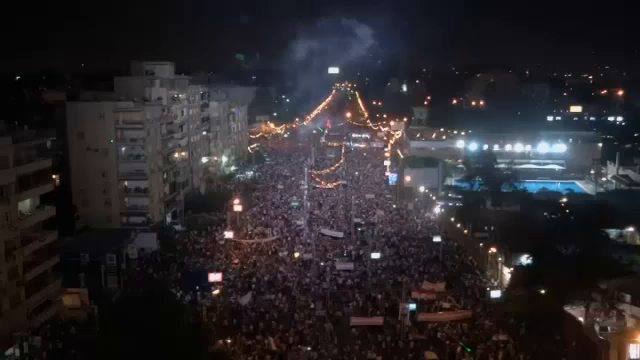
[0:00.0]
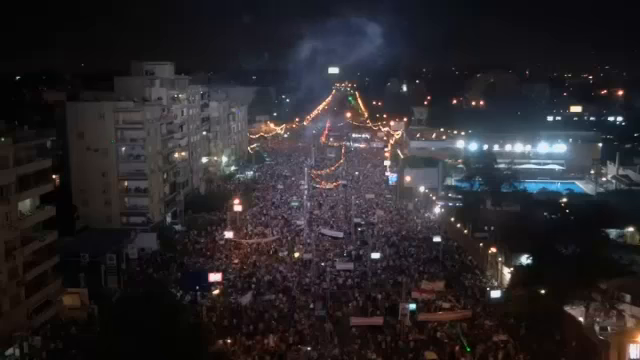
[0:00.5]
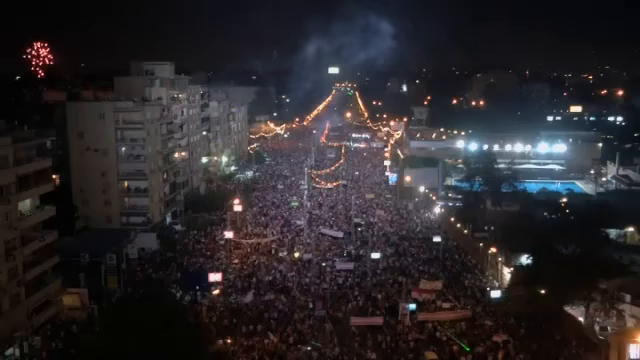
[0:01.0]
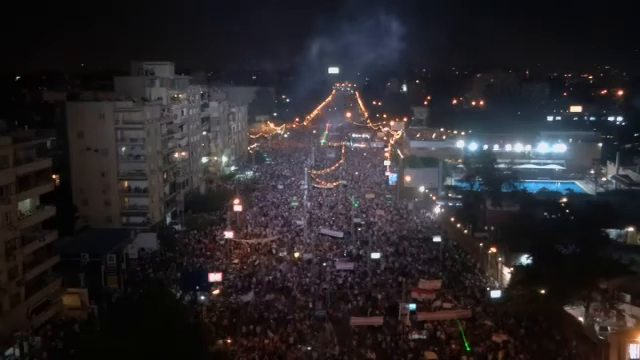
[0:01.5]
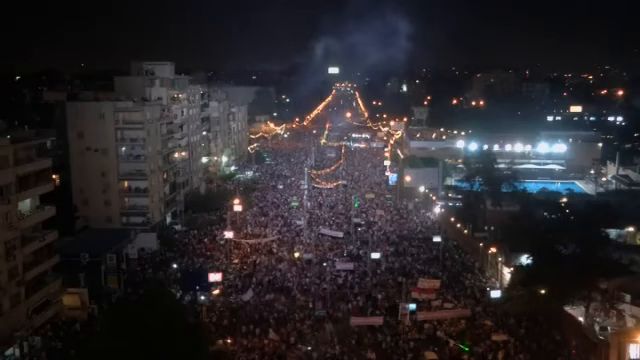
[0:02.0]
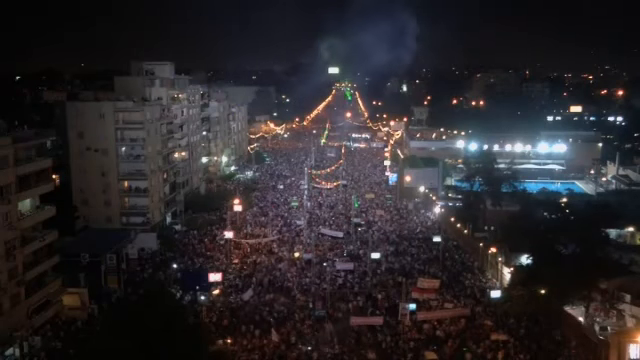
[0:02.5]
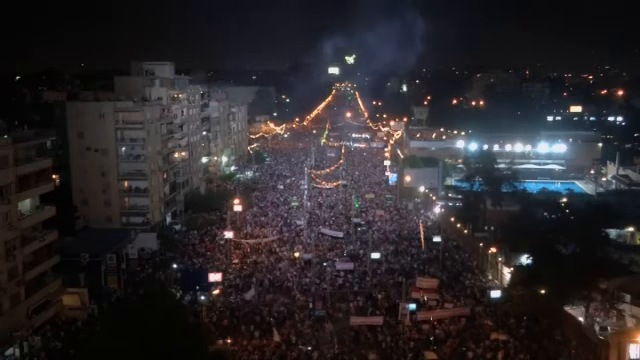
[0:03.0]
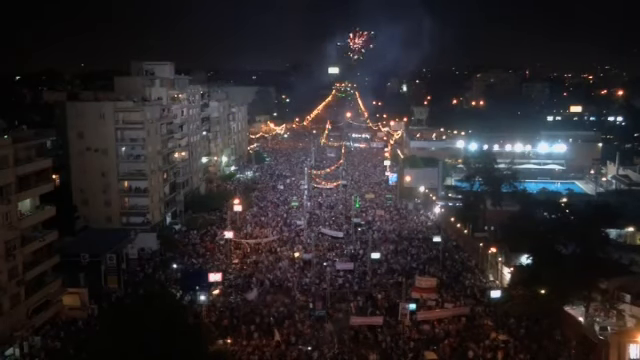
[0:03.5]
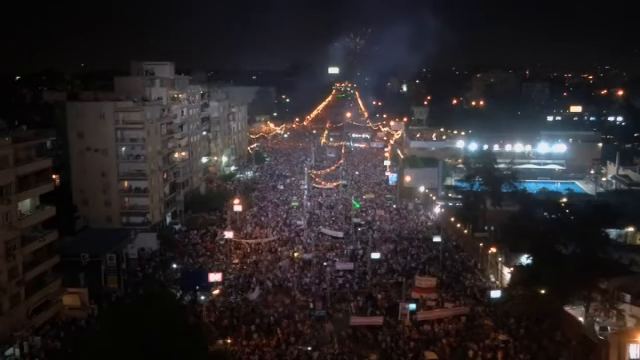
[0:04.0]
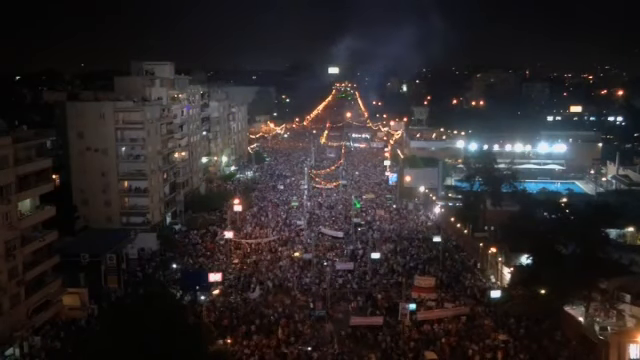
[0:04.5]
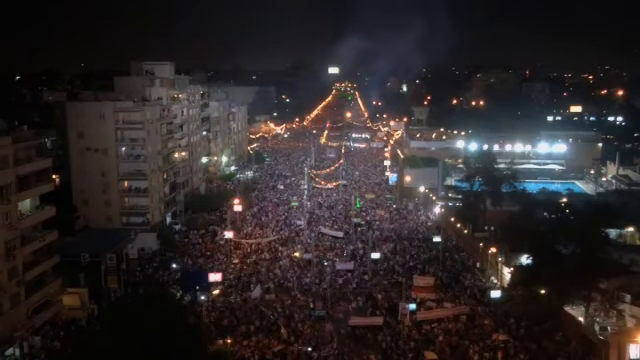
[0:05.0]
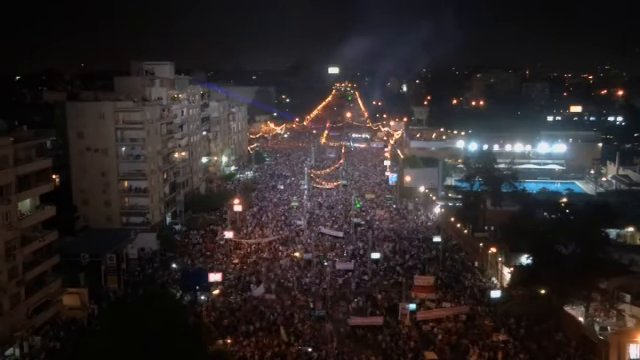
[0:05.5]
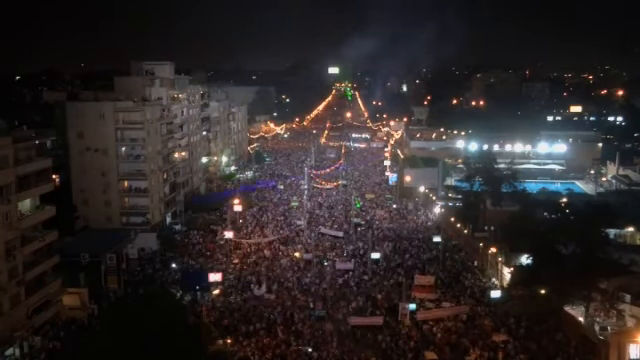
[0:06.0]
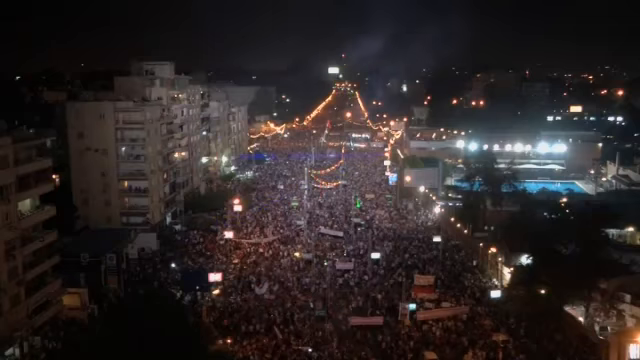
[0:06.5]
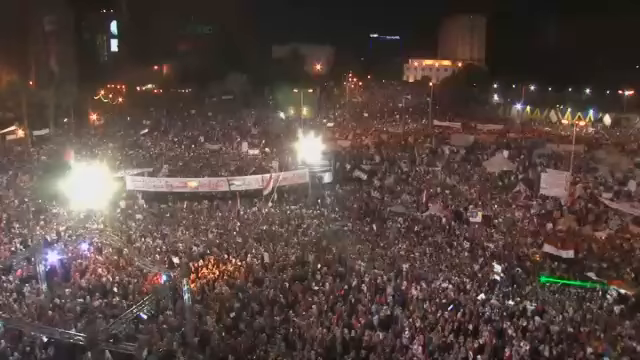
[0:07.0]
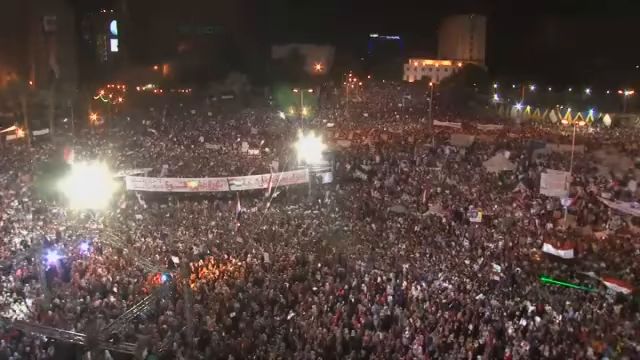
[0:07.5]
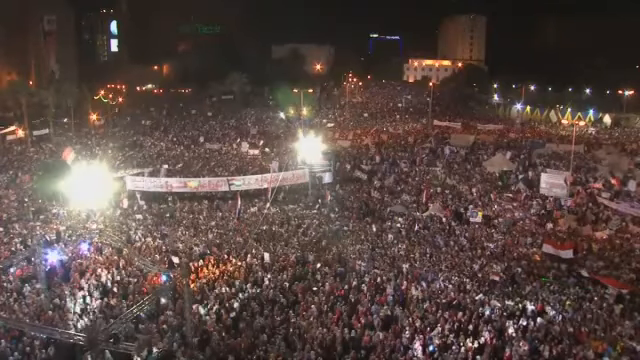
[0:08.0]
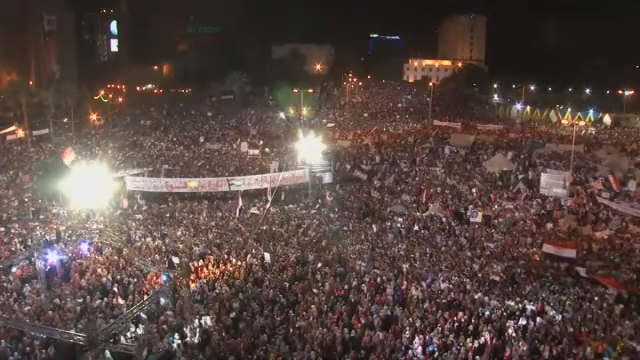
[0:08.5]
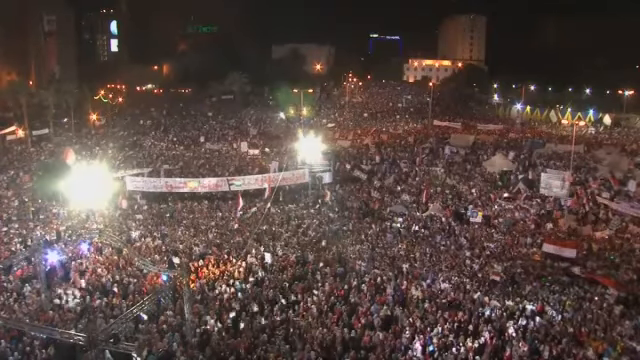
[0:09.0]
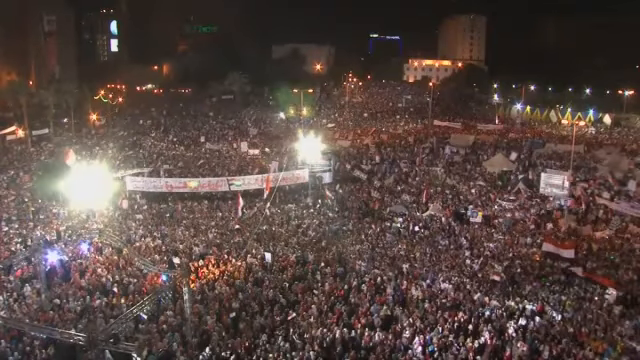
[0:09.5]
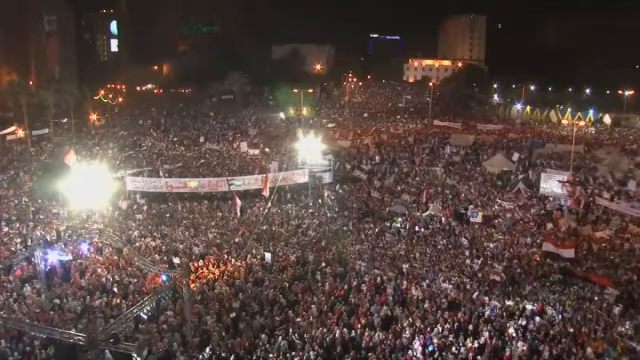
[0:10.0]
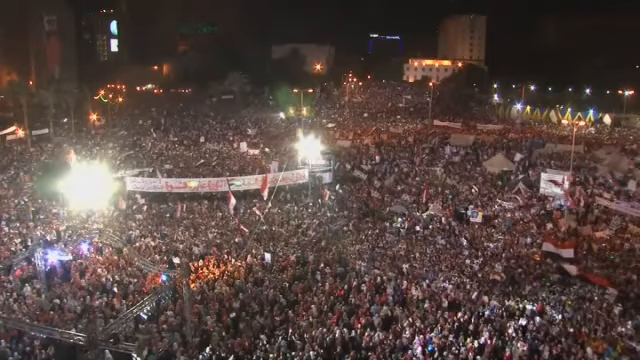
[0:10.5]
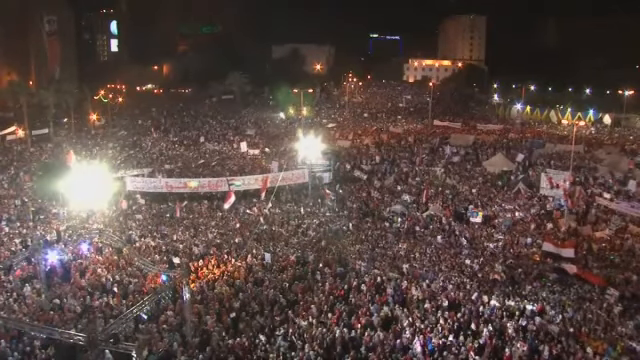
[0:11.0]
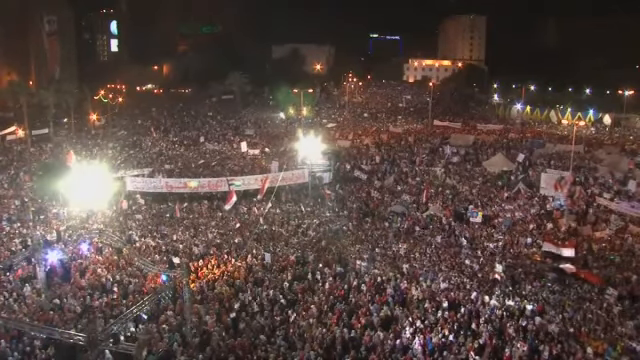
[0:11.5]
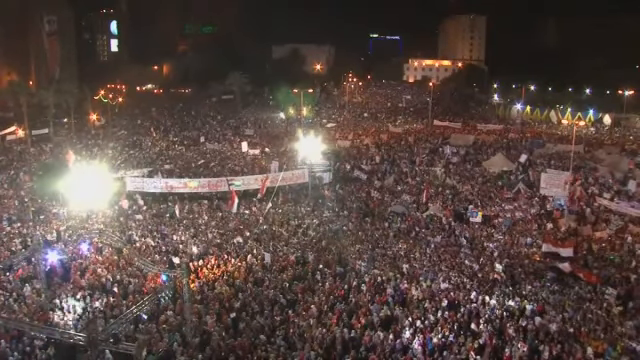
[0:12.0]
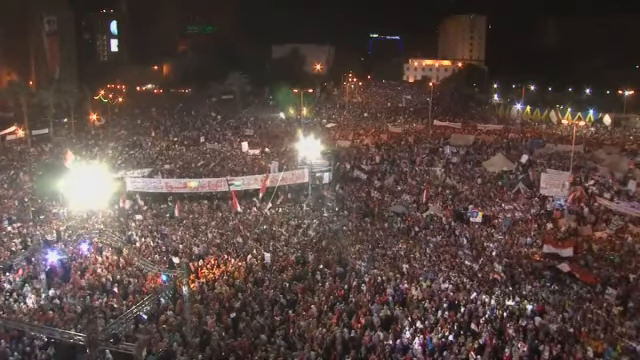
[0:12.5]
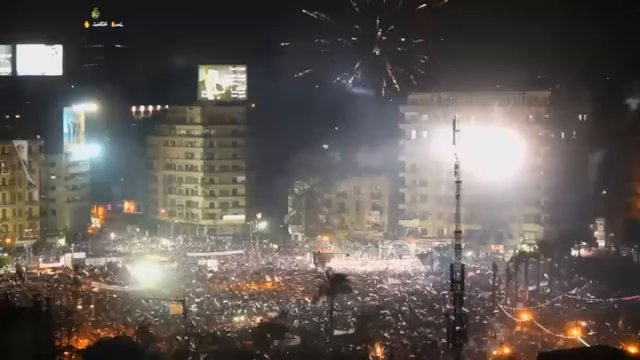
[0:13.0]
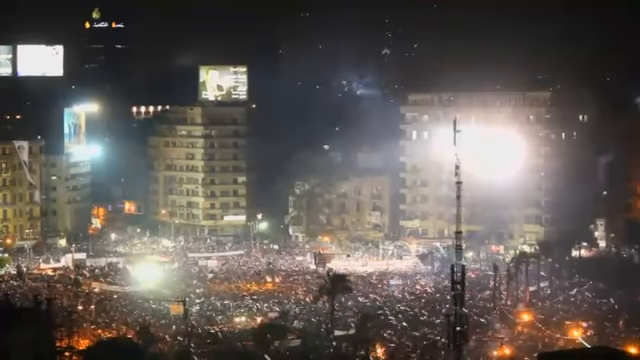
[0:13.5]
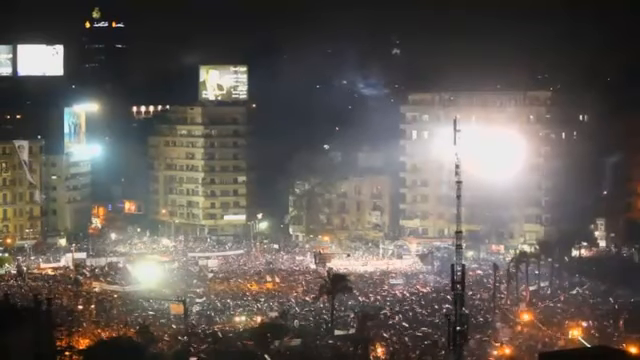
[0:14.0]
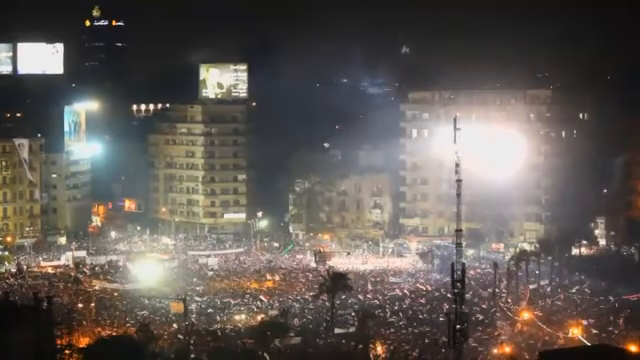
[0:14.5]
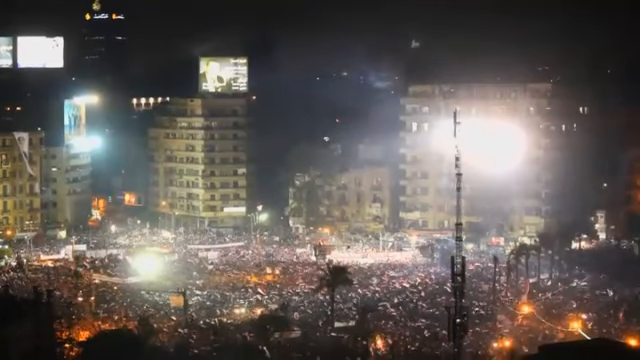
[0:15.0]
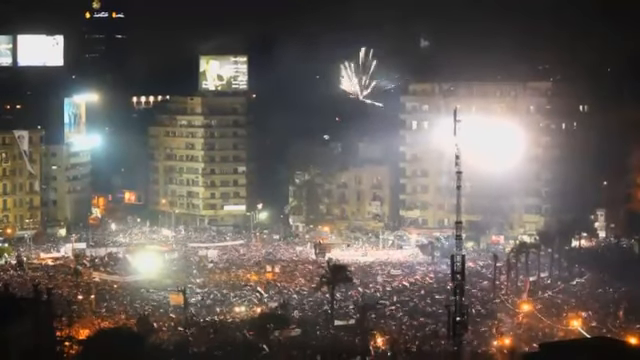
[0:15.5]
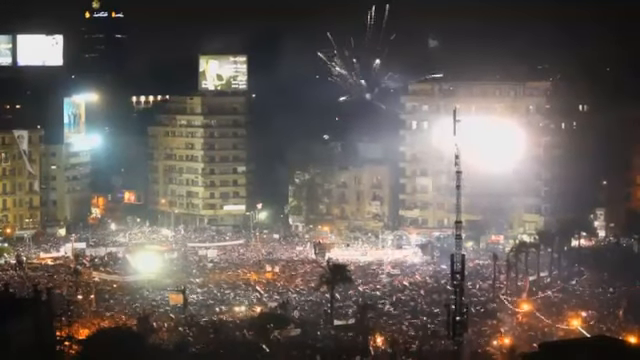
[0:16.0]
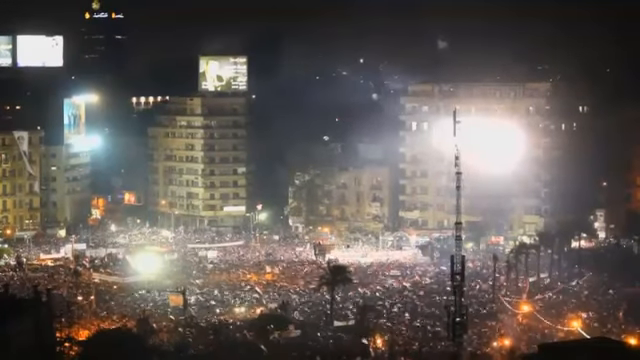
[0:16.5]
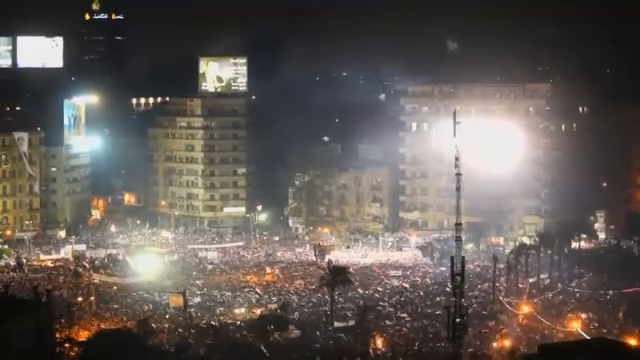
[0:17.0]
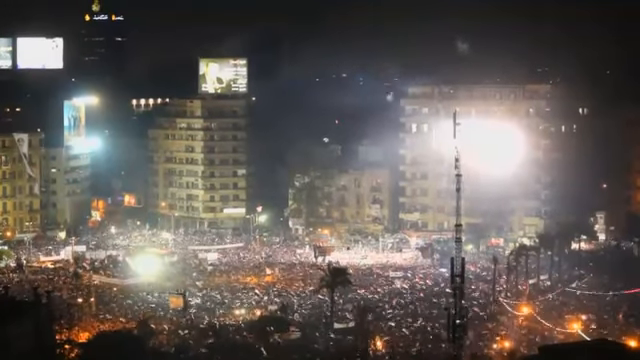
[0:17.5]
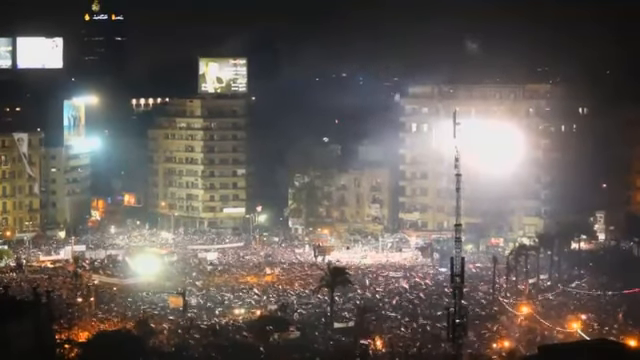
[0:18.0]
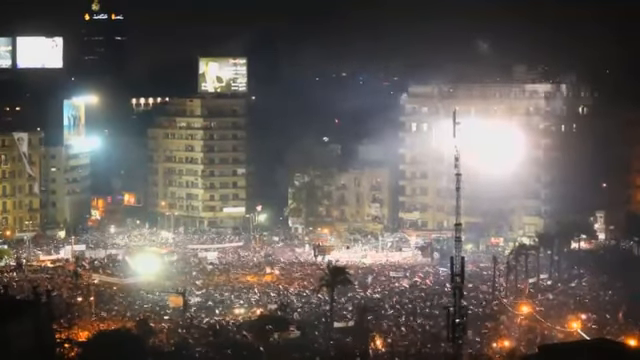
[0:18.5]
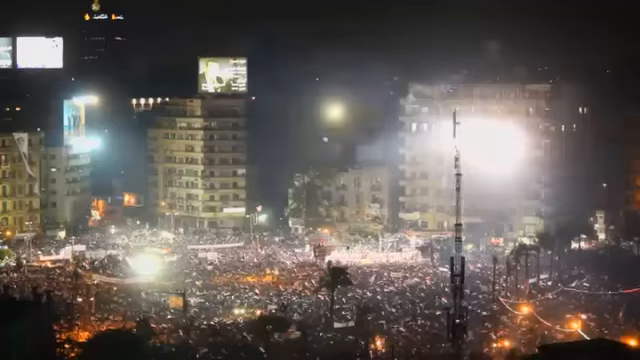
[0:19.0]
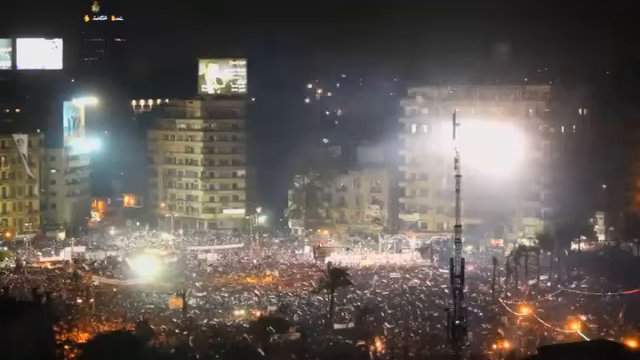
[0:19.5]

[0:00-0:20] Thousands of people are gathered on the streets, probably celebrating, and some are shooting things into the sky. Egyptian flags are visible among the crowd, and an image of President Mohamed Moussi appears.